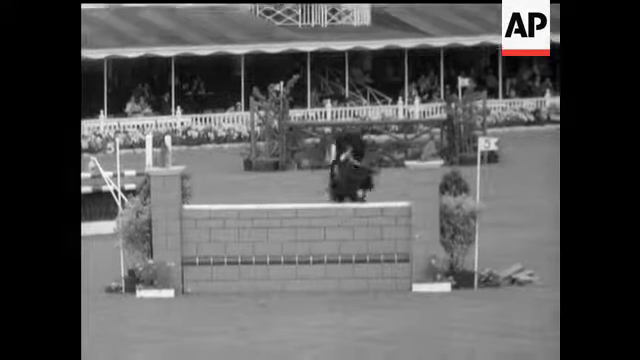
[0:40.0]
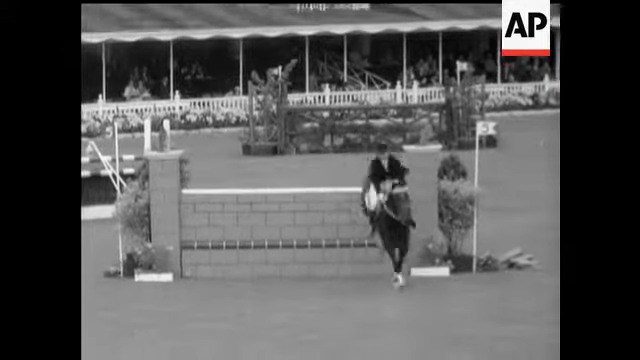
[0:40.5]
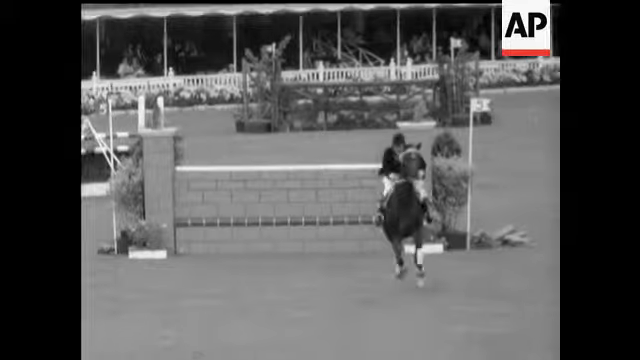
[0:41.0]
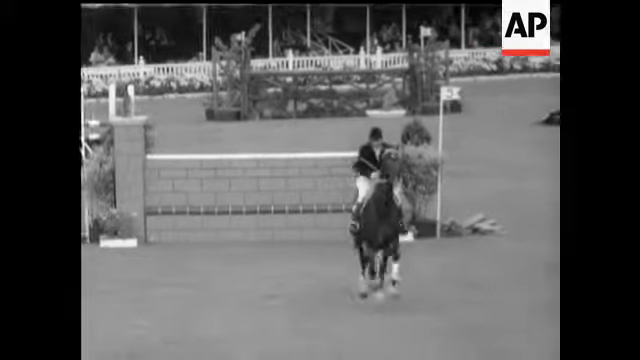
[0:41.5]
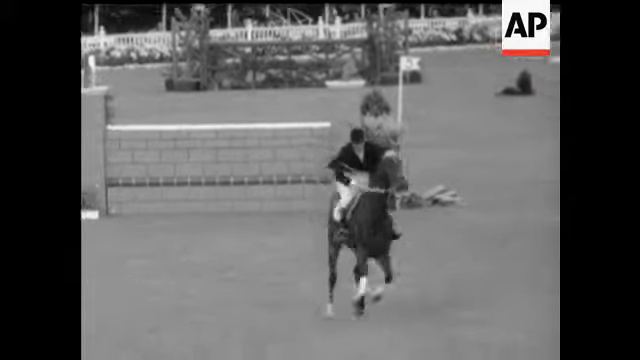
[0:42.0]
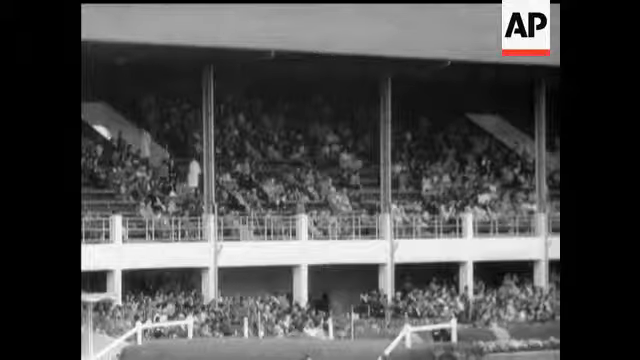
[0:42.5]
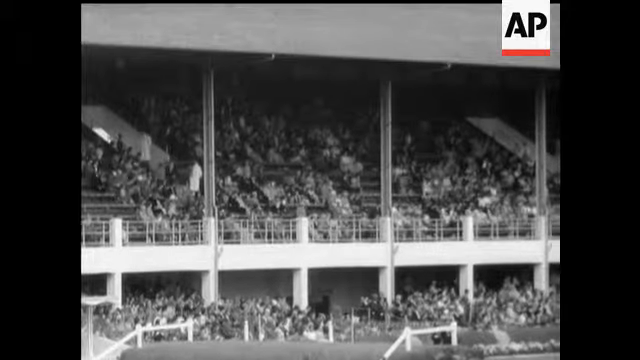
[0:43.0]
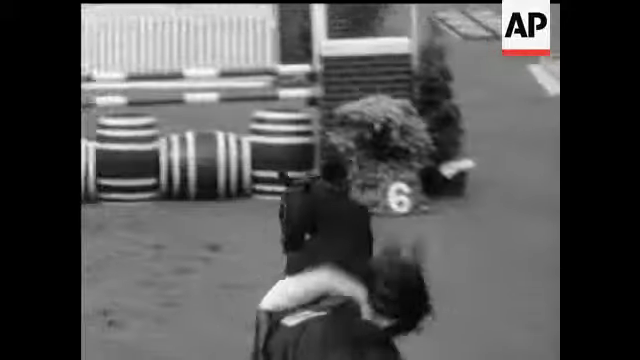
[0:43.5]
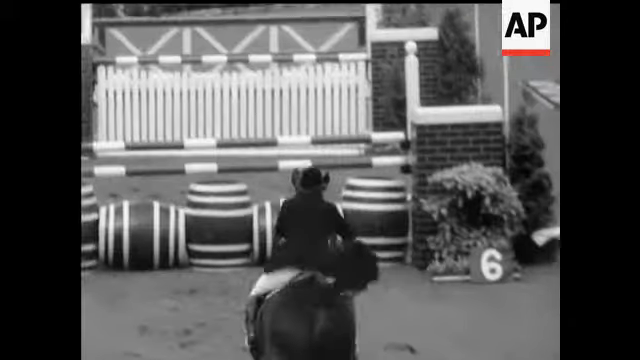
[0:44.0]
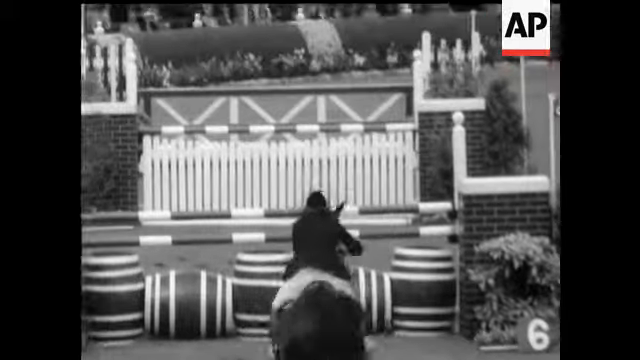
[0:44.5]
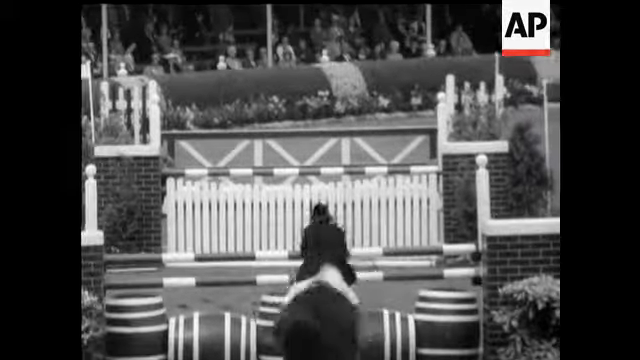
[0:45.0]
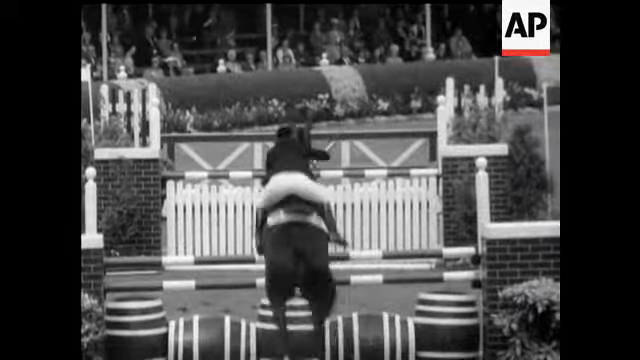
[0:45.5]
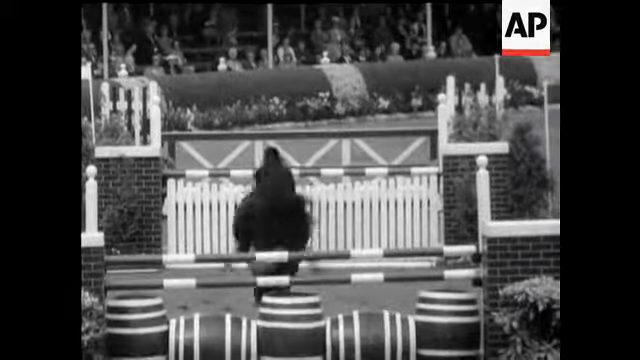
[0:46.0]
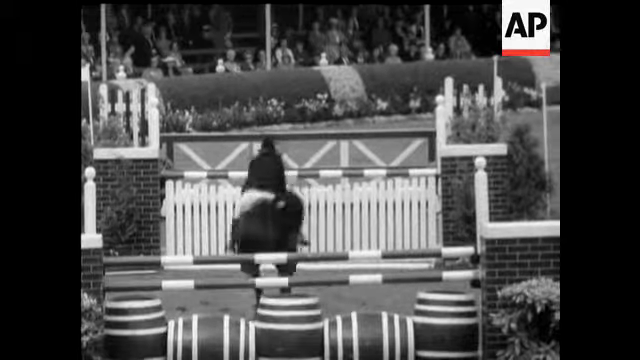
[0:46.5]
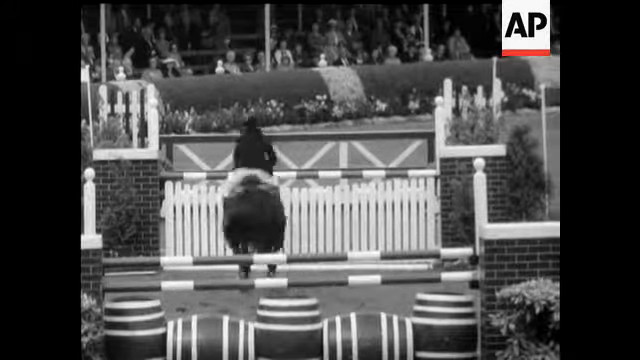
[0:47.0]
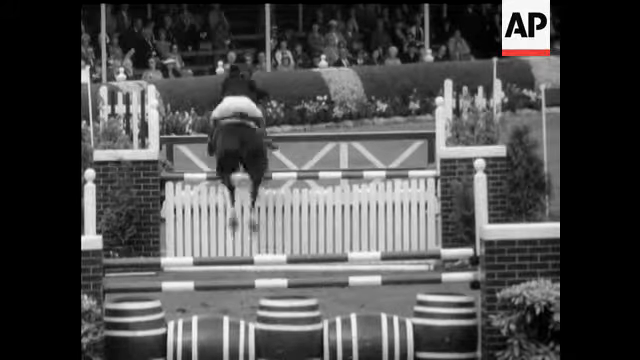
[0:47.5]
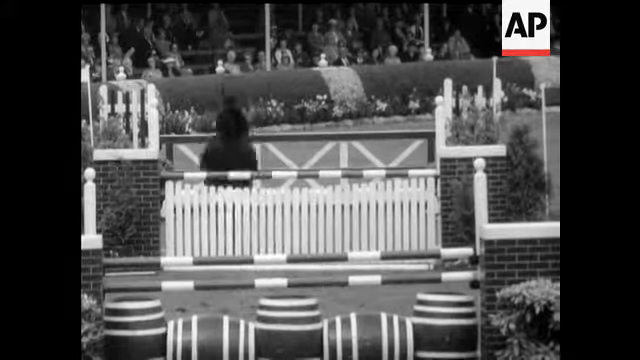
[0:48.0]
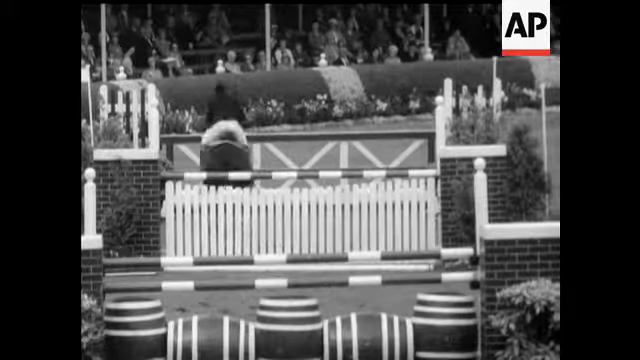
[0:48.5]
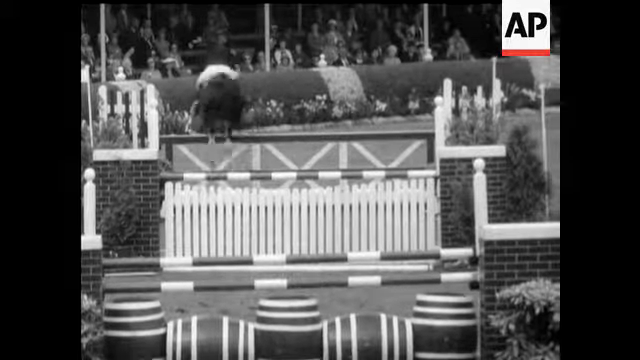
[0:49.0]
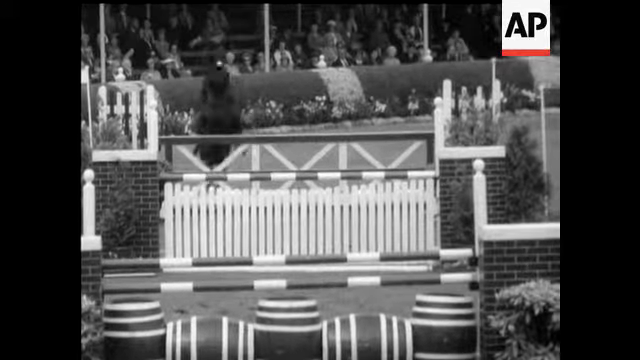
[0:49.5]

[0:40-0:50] A horse jumps over a brick wall, and a shot of the crowd shows the stadium looking very packed. The jockey rides the horse as it jumps over various obstacles. A view from behind the horse and jockey shows them leaping over three barricades in a row, the horse's hooves staying close together as it makes the leaps. The number six is on the ground. The jockey gives the horse a nudge right before each barrier, and they jump quite high.